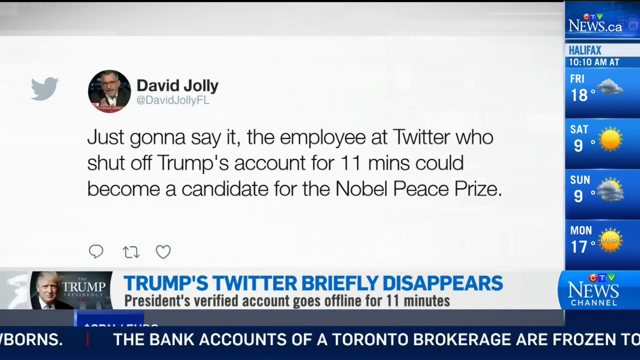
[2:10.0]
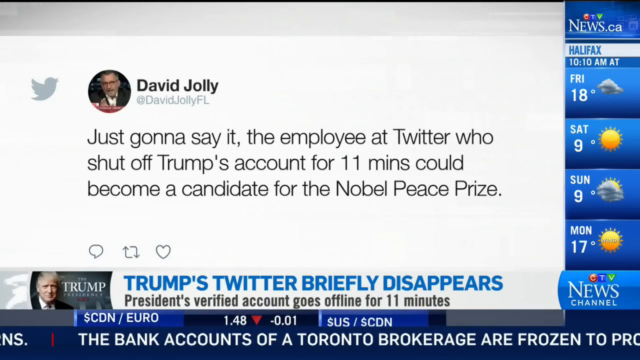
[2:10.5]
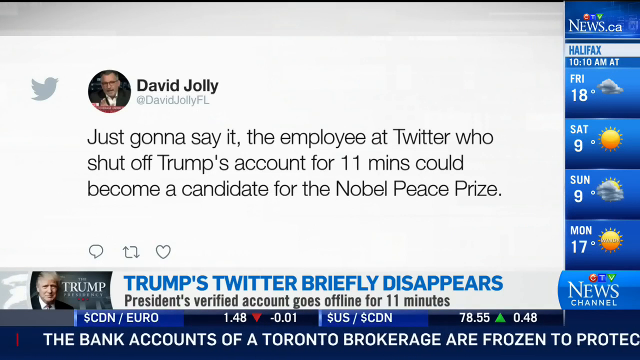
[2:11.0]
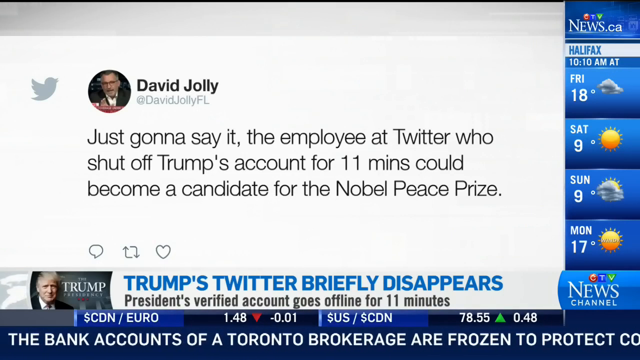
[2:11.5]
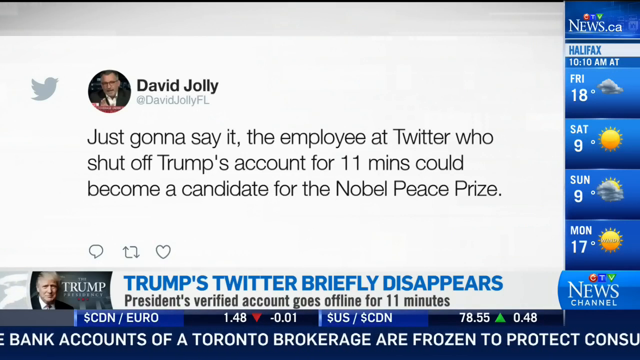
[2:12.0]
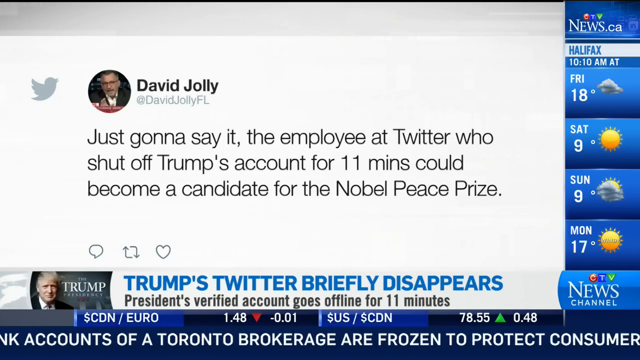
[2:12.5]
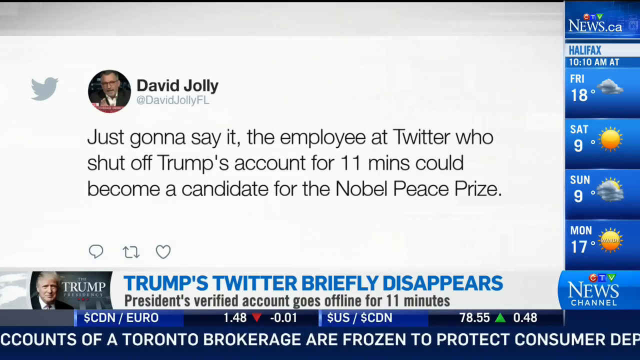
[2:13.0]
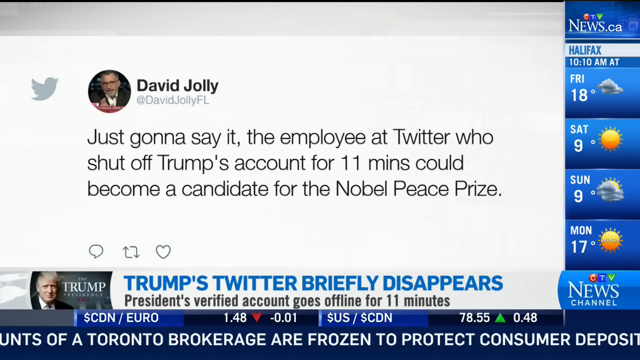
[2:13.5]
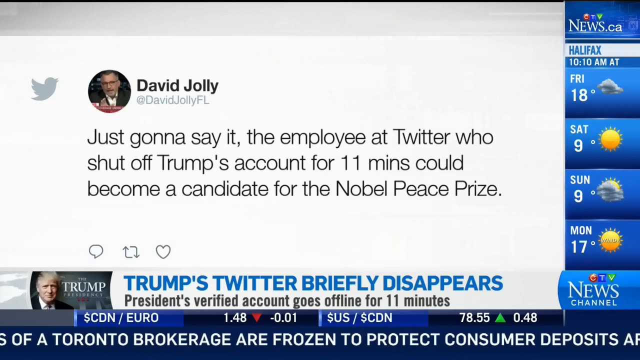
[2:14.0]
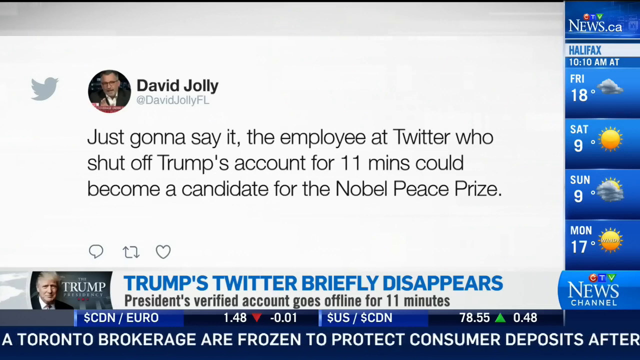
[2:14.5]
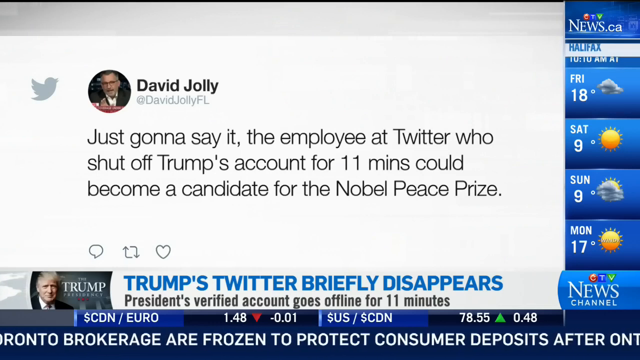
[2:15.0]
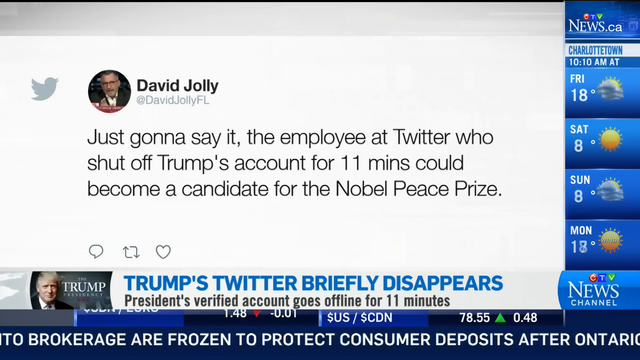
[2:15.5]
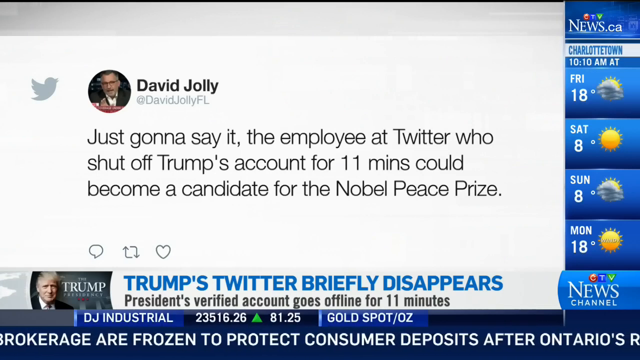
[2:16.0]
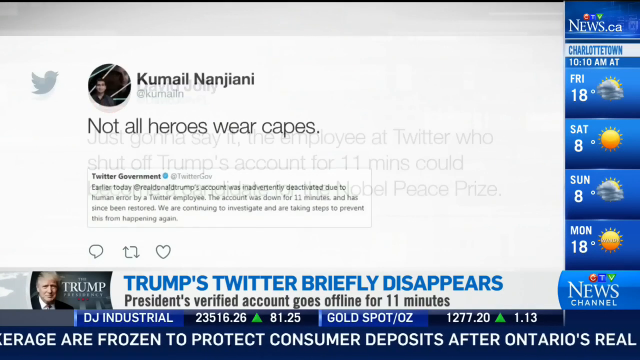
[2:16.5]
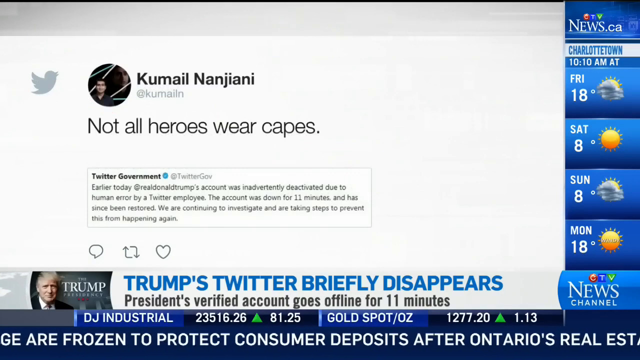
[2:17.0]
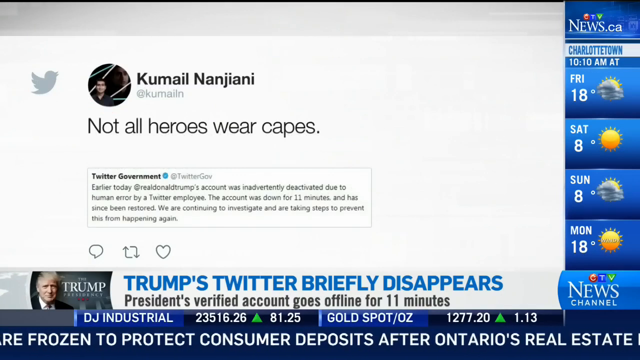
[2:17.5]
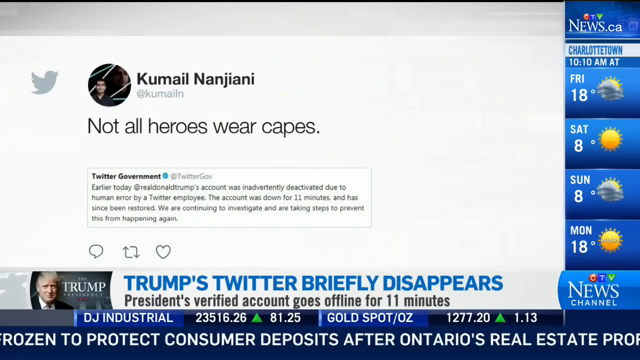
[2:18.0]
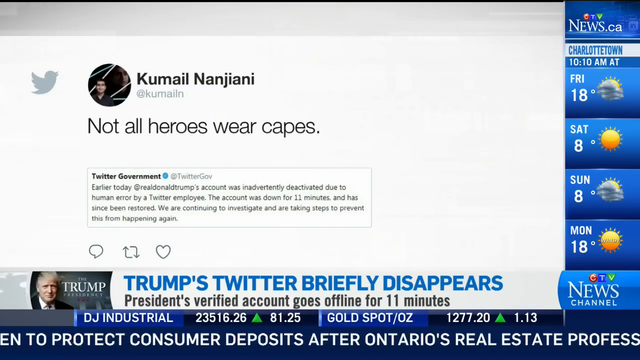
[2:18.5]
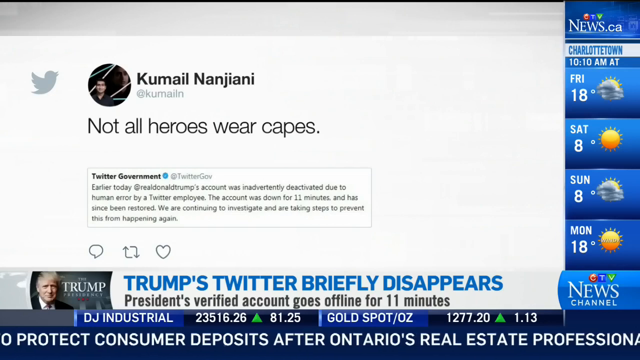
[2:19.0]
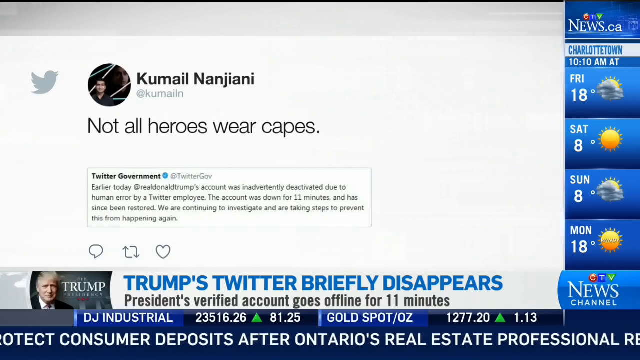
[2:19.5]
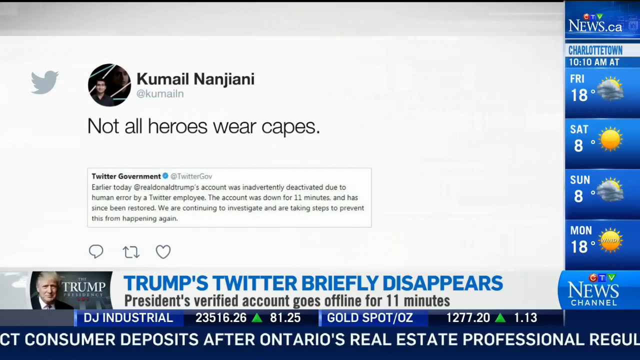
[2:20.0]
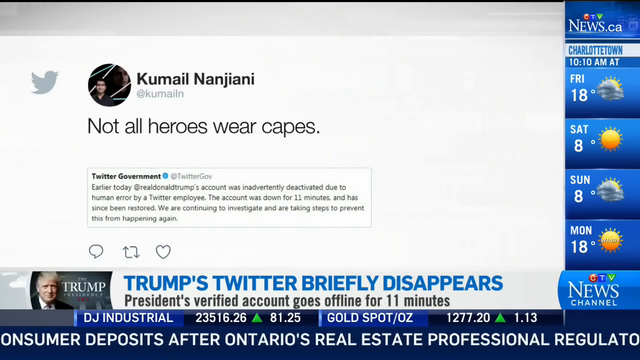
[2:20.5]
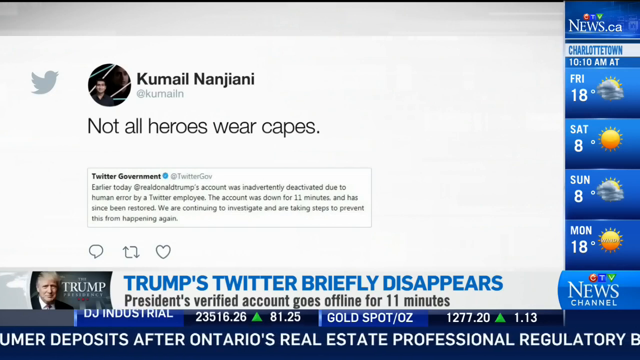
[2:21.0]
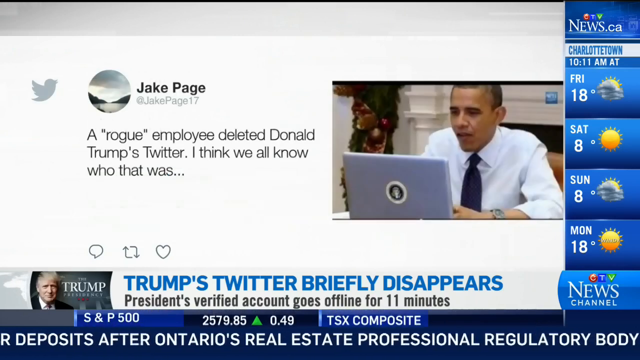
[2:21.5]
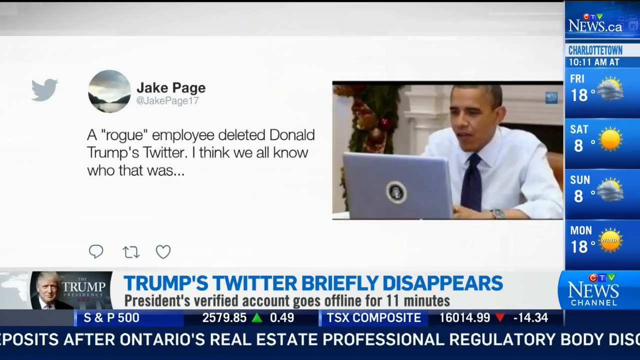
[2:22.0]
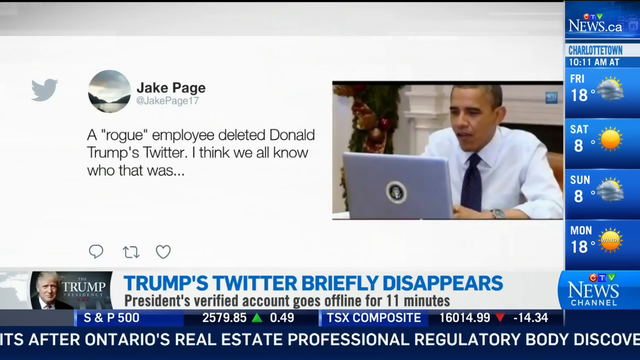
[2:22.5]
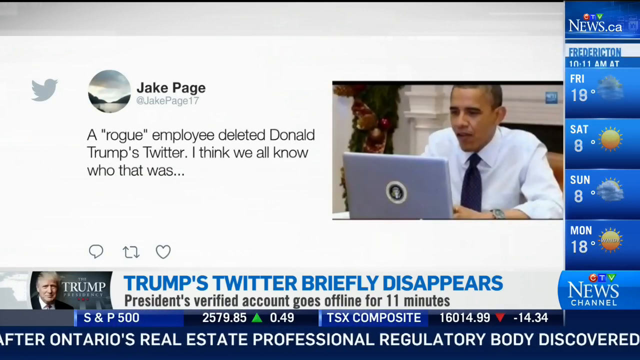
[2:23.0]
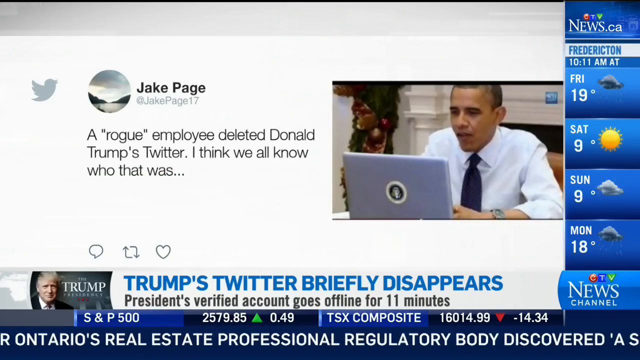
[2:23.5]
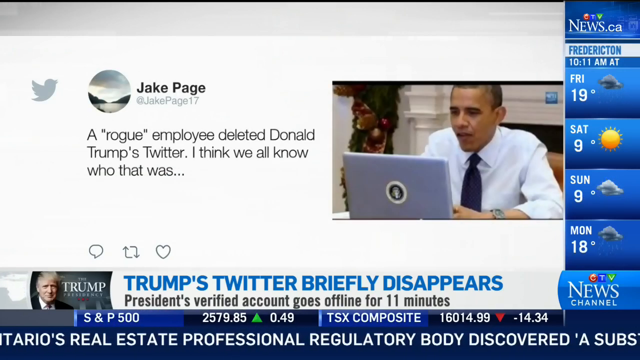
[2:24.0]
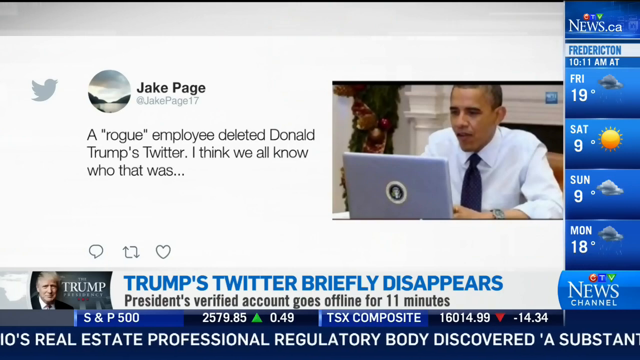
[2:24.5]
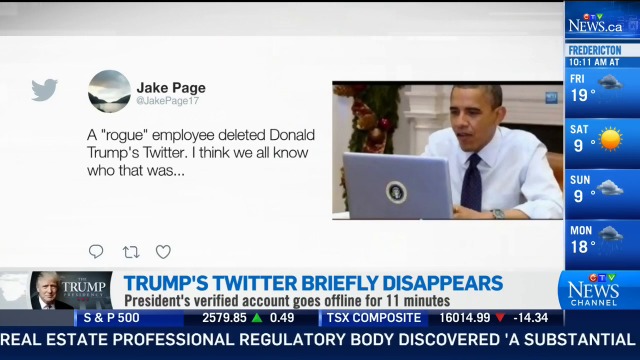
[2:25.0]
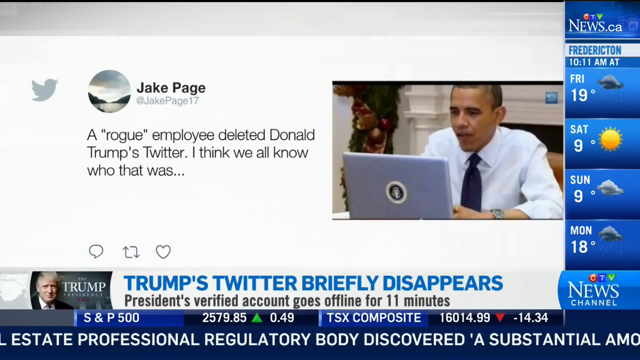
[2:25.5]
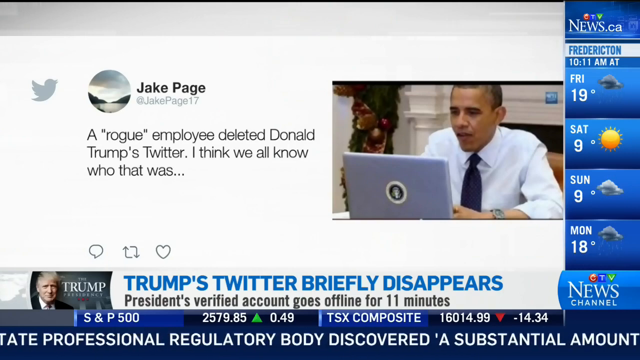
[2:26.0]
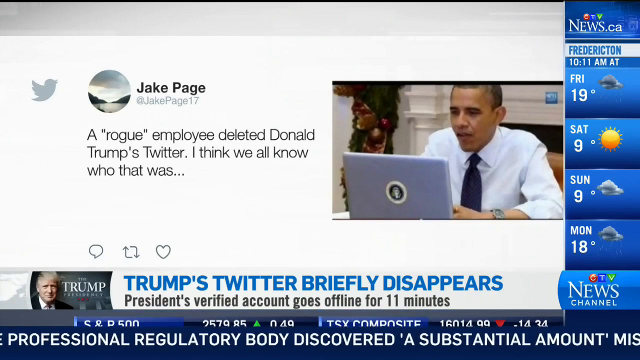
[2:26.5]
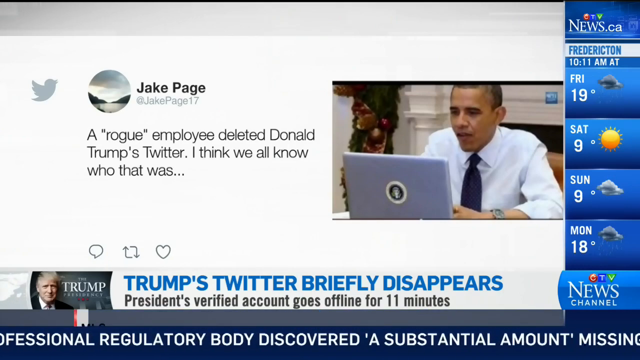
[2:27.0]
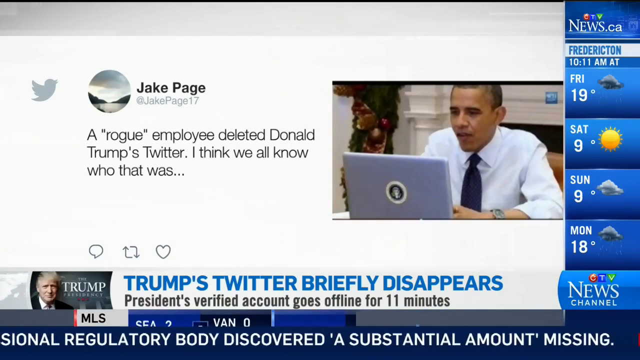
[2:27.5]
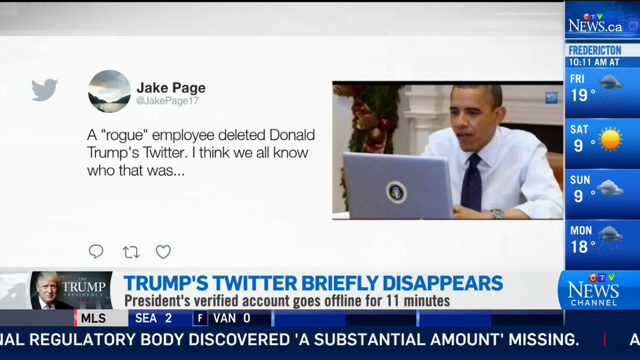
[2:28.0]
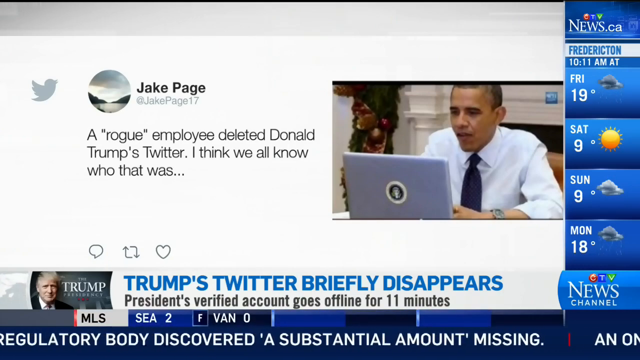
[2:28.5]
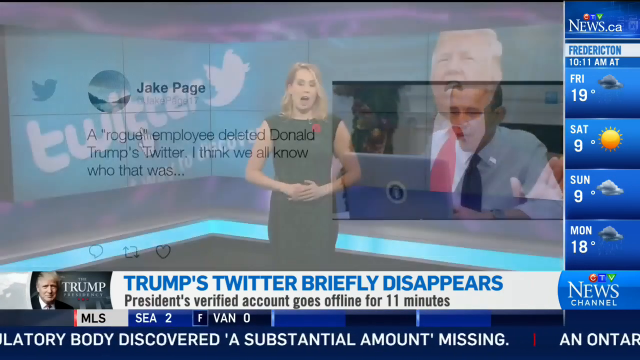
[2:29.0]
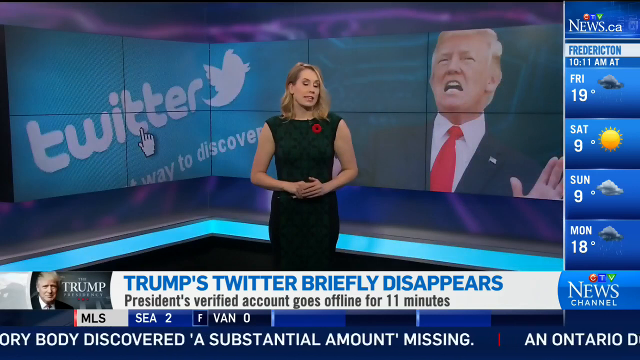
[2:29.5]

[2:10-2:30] Stock market updates start appearing at the bottom of the screen, including the euro, apparently the DJ Industrial, and the gold spot price with an increase. Other headlines crawl past, about a regulatory body that discovered a substantial amount missing and something about an Ontario doctor. The weather section on the right keeps changing towns, showing Charlottetown and then Fredericton. On the big screen, the tweets change: first someone's tweet reading "not all heroes wear capes," then a tweet from a man named Jack Page reading "a rogue employee deleted Donald Trump's Twitter, I think we all know who that was." The tweet takes up a good portion of the screen. Jack Page's profile picture is not of him; it looks like maybe a rainy day out on a lake. To the right is a picture of former President Barack Obama, possibly from his time in office. He is dressed up in a dress shirt that looks maybe light blue or white, with the lighting making it look more colorful, plus a black tie and a watch on his wrist. He sits at a laptop, and there appears to be a decorative art piece and a fireplace behind him. The video then very briefly shows the news reporter in the black sleeveless dress.